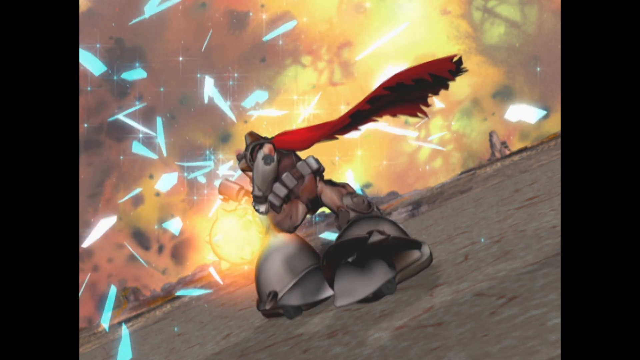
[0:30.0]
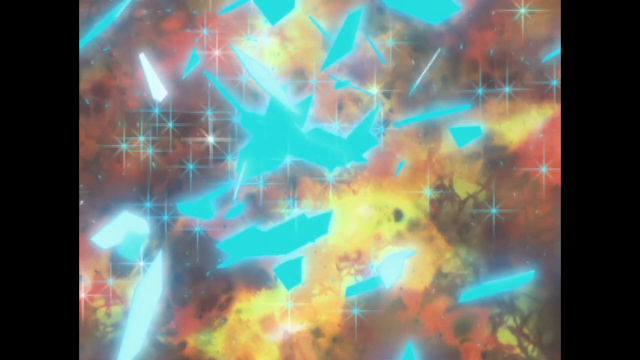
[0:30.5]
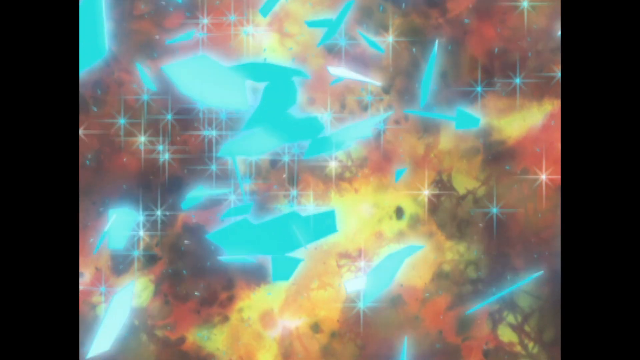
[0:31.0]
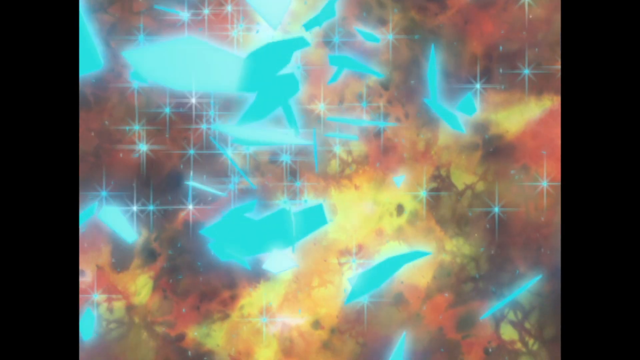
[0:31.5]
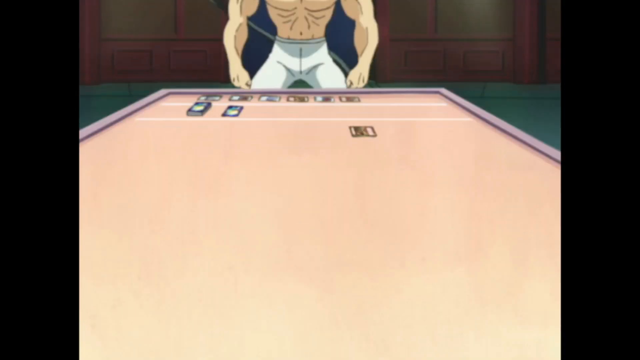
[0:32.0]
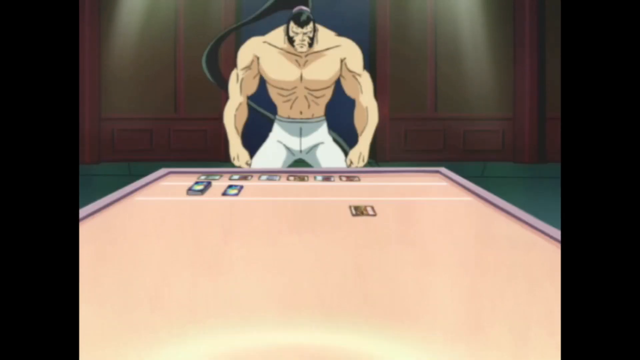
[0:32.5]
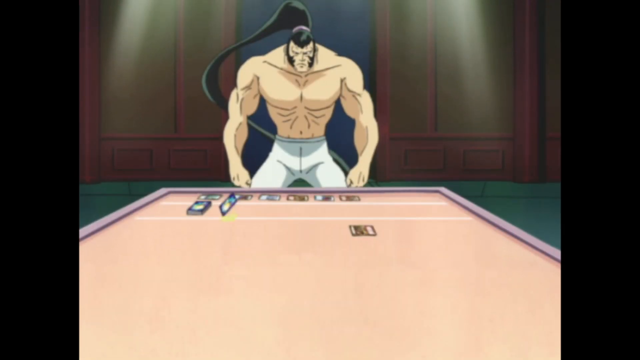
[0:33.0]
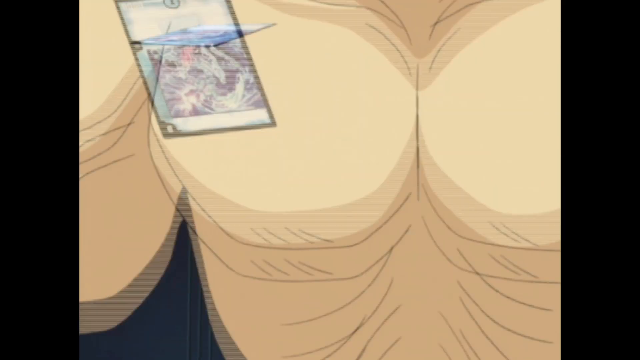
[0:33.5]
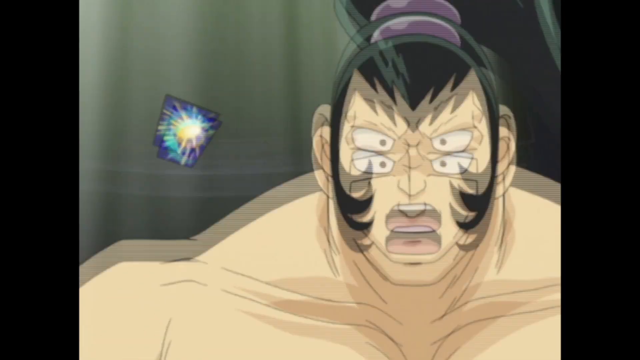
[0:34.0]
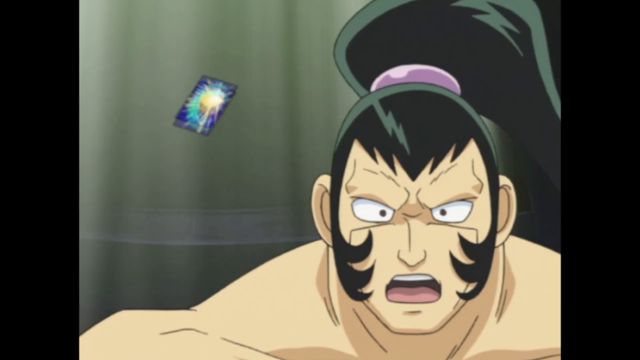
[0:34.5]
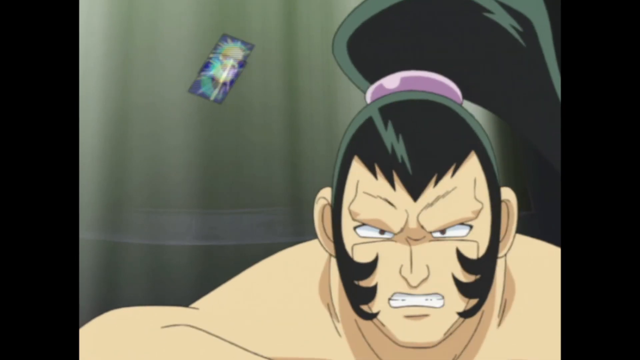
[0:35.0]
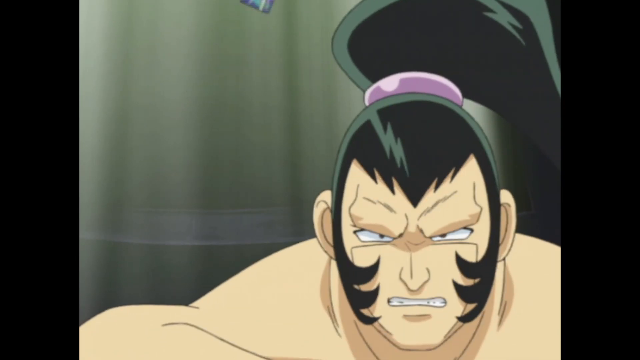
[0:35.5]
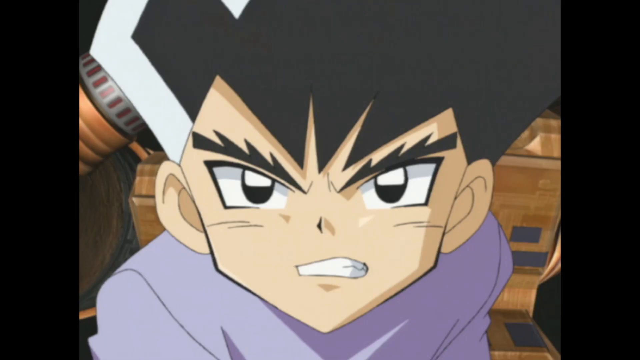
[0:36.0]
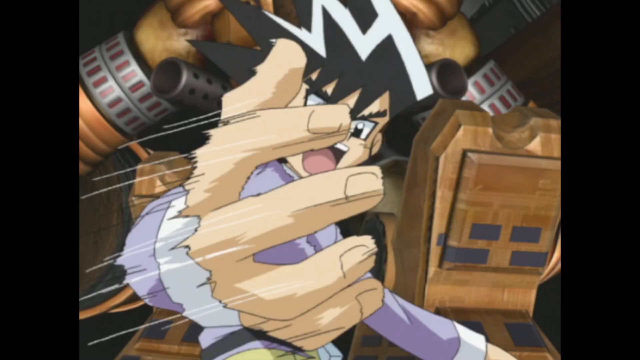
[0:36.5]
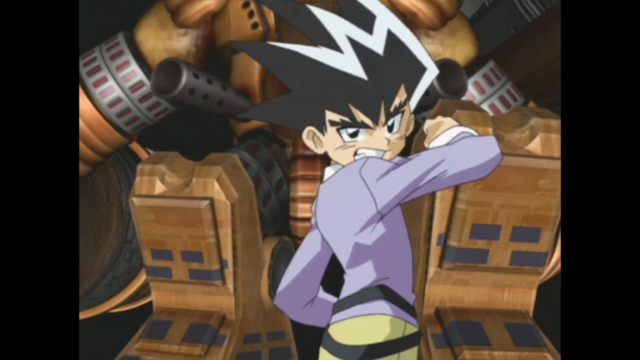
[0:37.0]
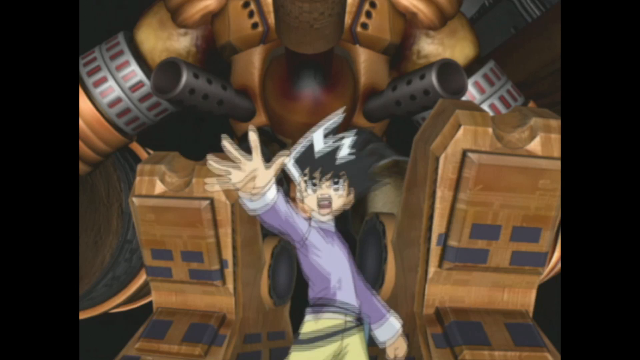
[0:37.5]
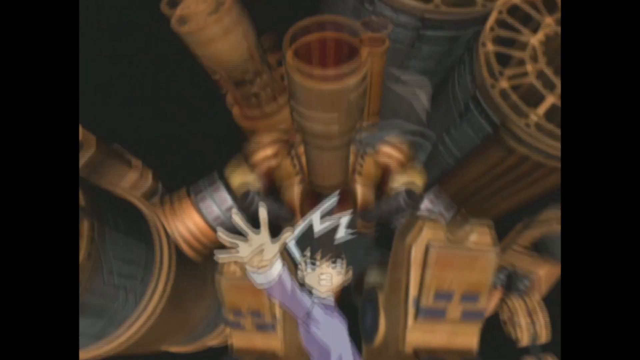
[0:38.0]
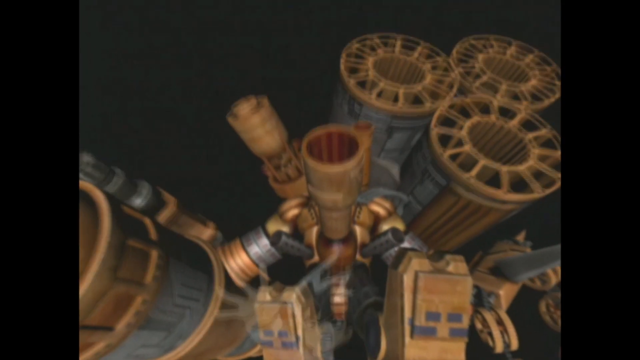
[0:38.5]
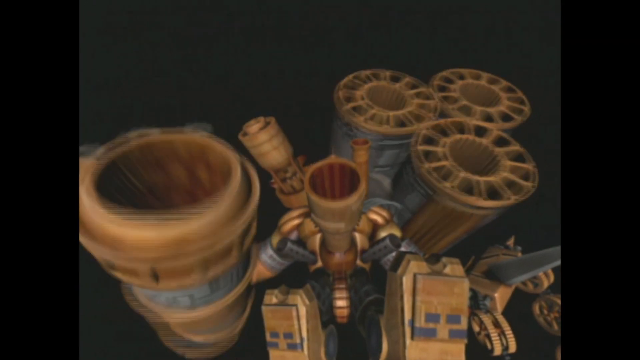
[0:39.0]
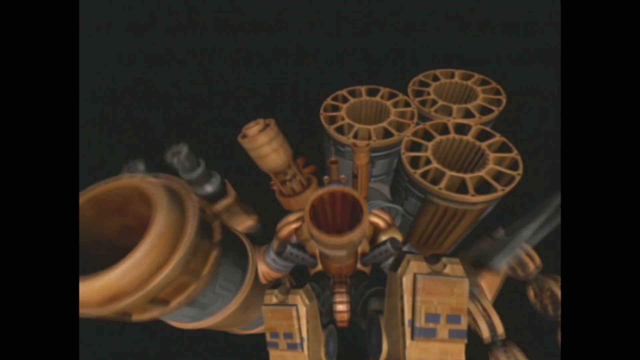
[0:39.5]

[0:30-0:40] The knight holds a fireball in his right hand at the glass; he looks like he is from ancient times. The shirtless young adult, furious, apparently tries to control one card with his mind. The other one, who wears a sweater, signals the robot above him to shoot; it looks like a gun. The shooting robot is brown and has many machine guns ready to shoot. Both are in the same room while two scenes are shown: the shirtless young adult and the one in the sweater control their figures to fight each other.